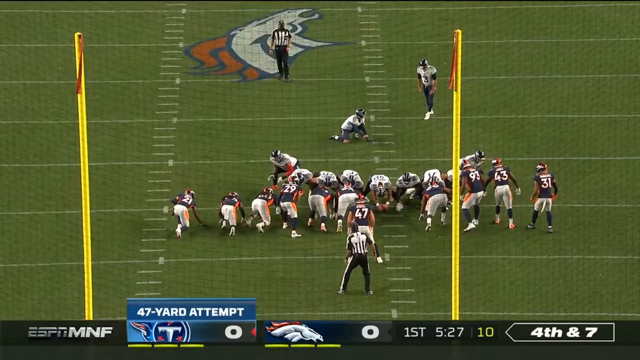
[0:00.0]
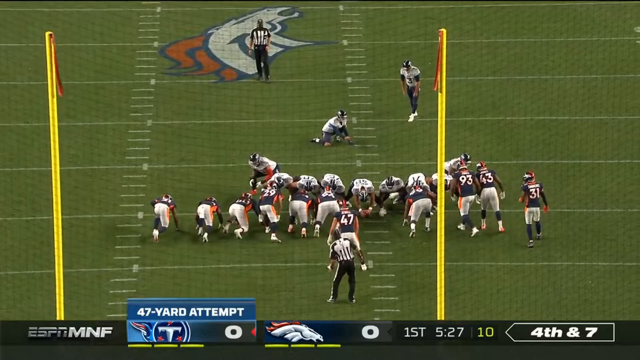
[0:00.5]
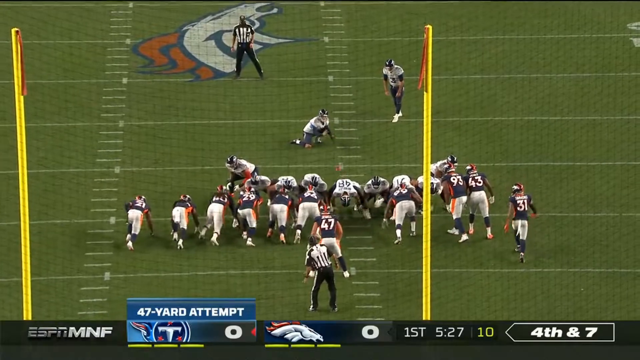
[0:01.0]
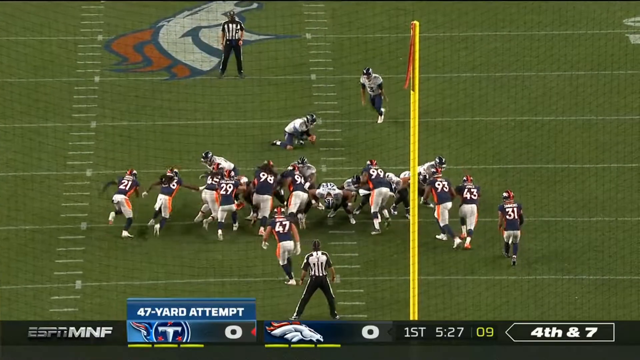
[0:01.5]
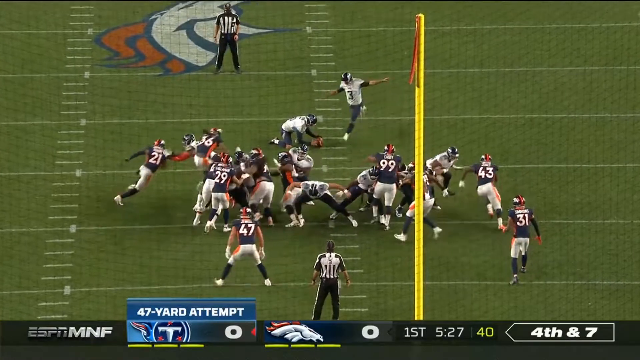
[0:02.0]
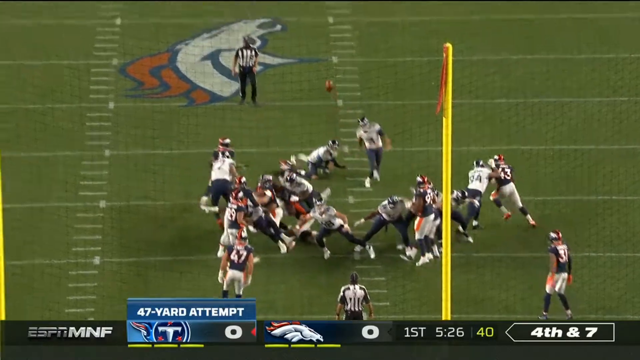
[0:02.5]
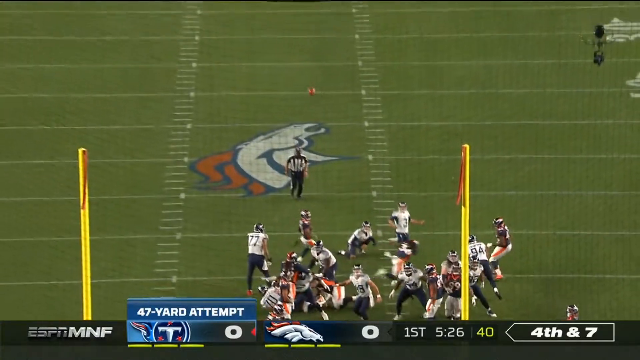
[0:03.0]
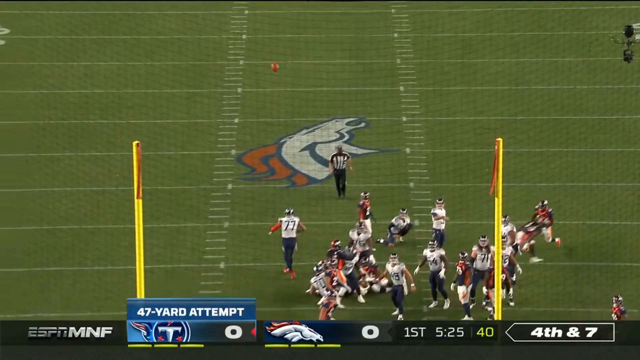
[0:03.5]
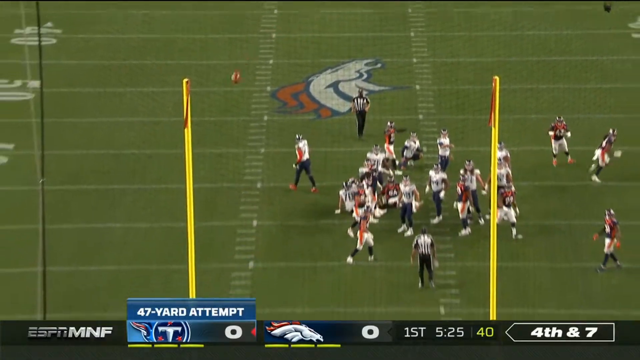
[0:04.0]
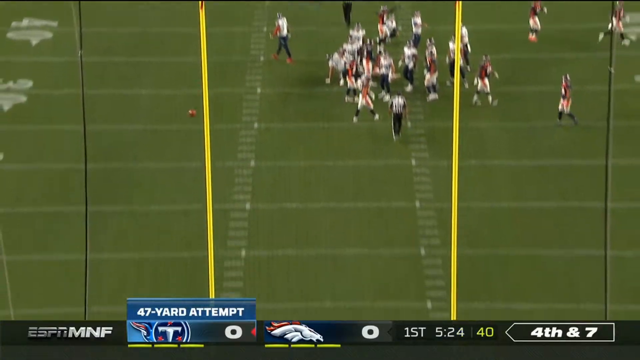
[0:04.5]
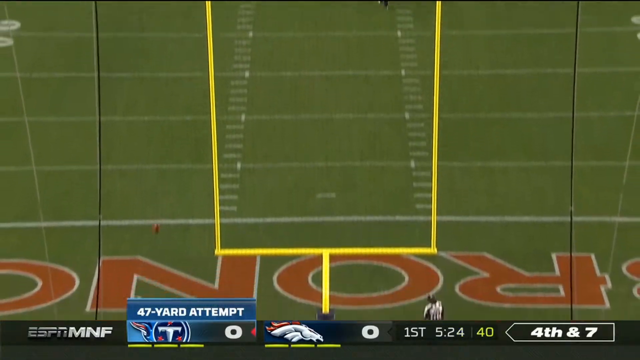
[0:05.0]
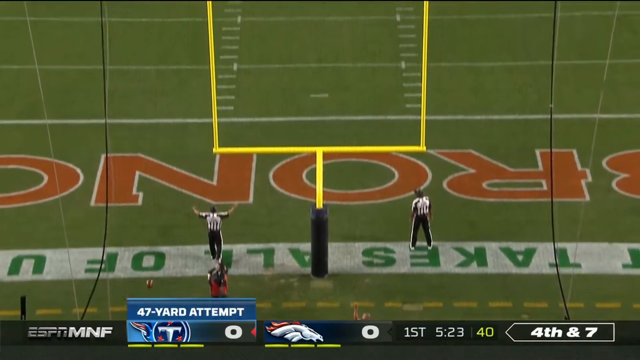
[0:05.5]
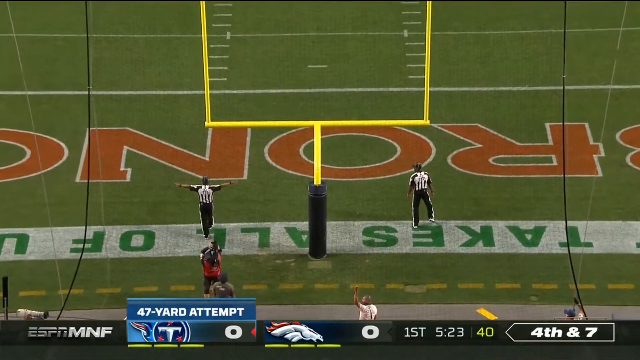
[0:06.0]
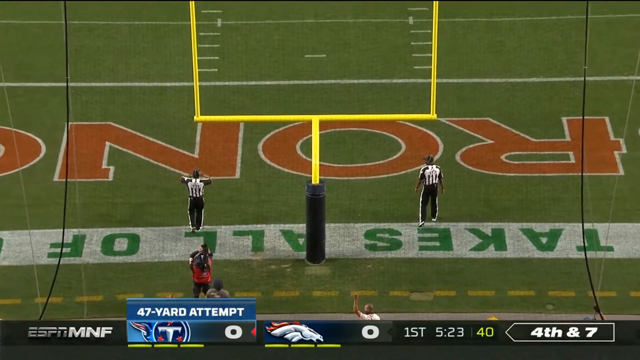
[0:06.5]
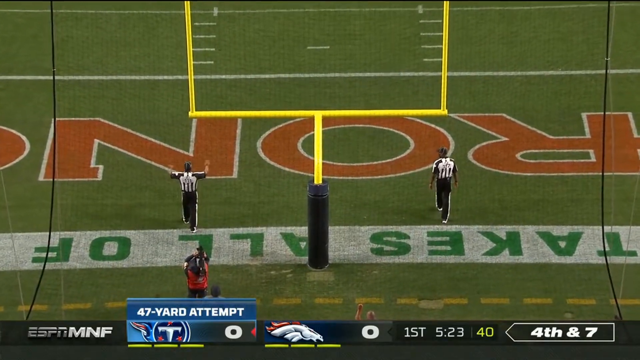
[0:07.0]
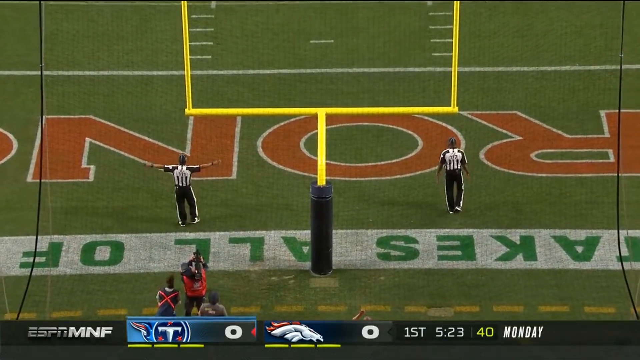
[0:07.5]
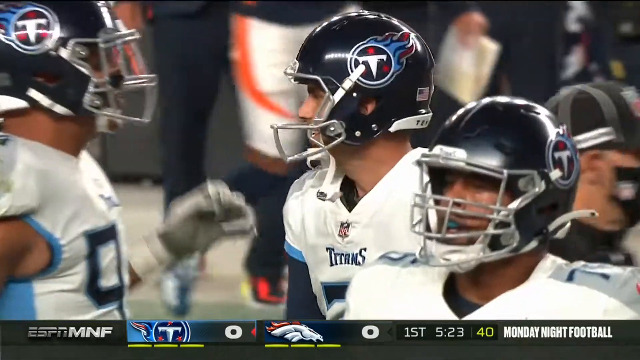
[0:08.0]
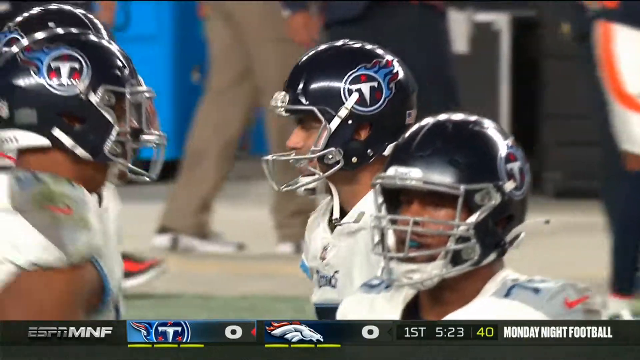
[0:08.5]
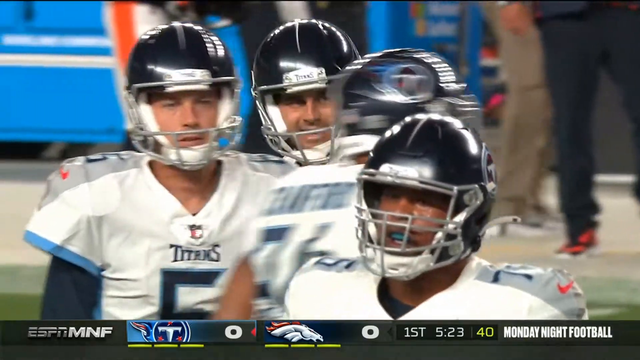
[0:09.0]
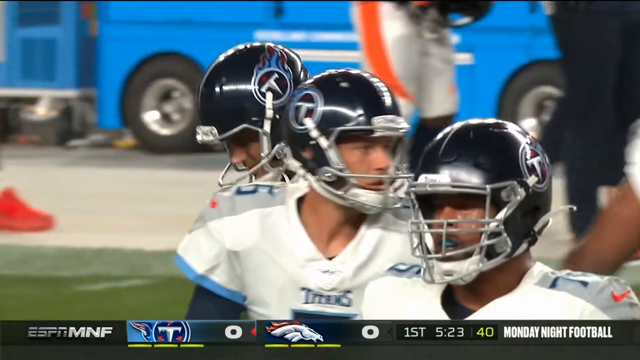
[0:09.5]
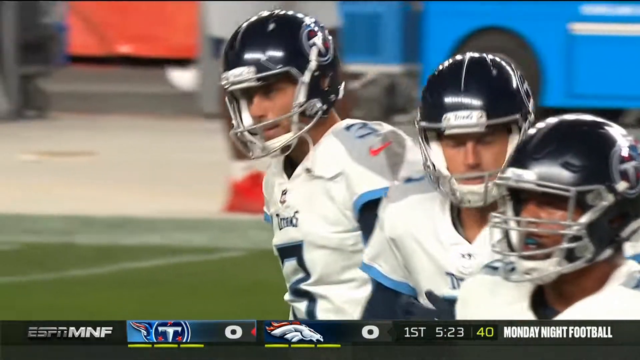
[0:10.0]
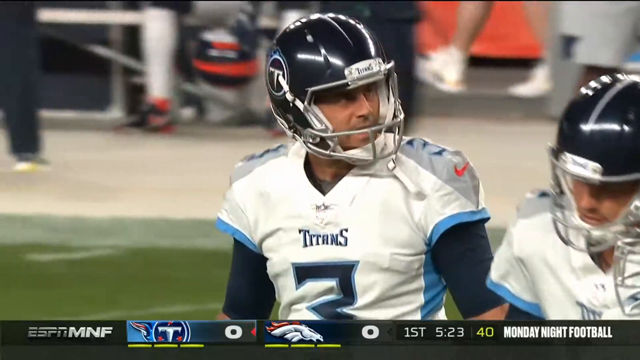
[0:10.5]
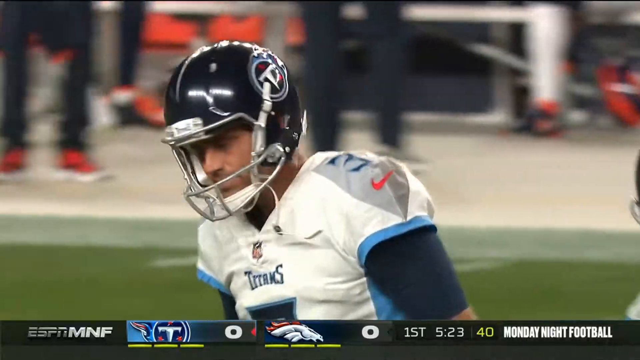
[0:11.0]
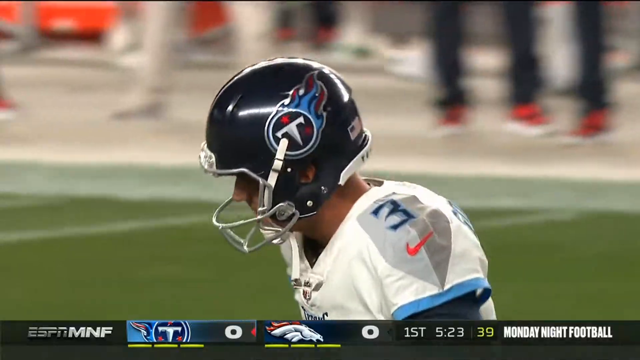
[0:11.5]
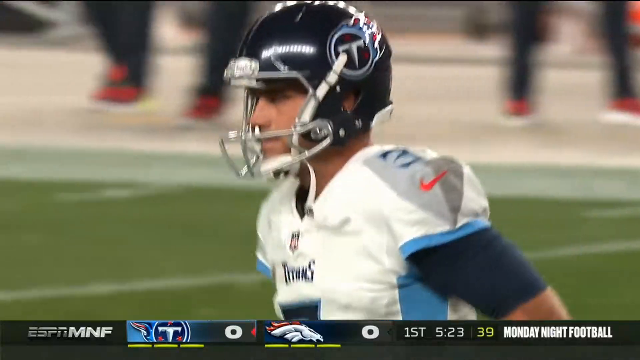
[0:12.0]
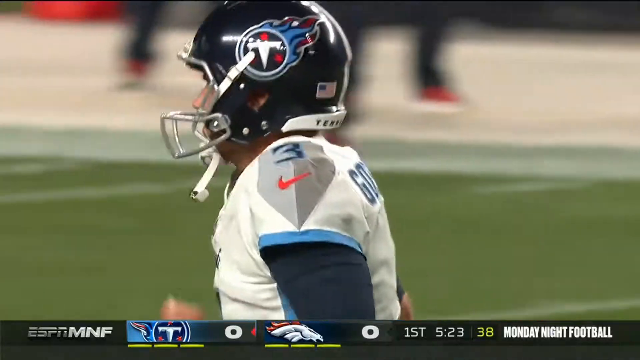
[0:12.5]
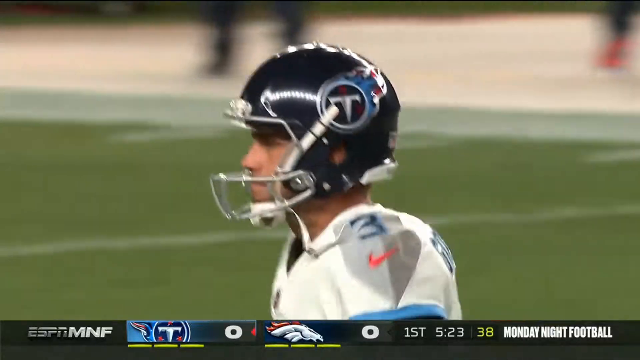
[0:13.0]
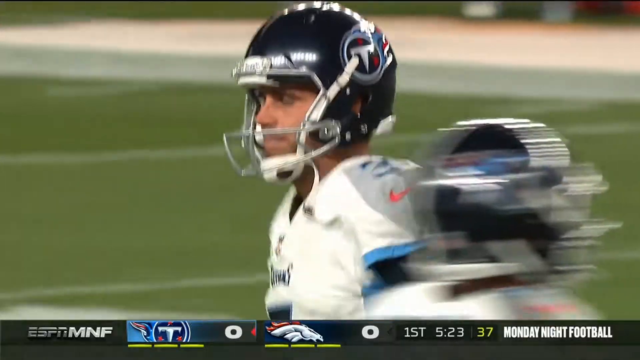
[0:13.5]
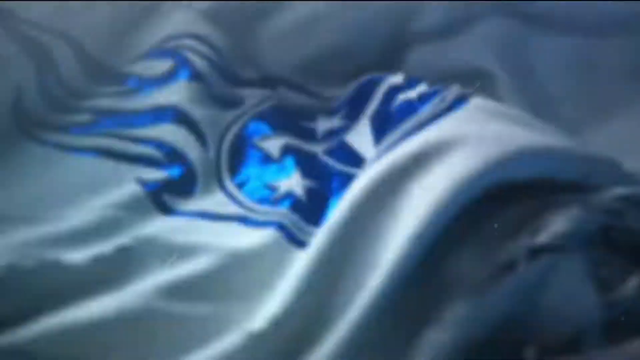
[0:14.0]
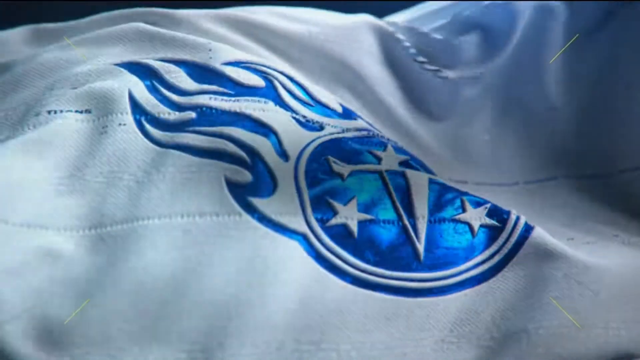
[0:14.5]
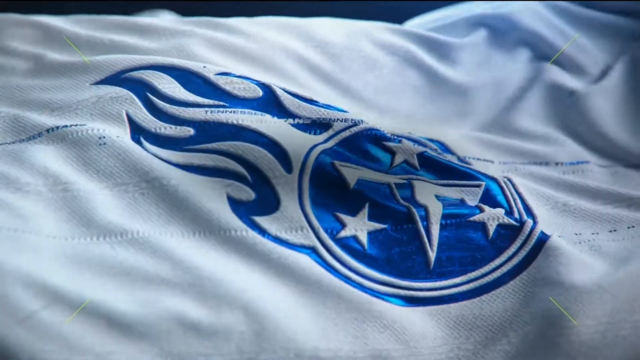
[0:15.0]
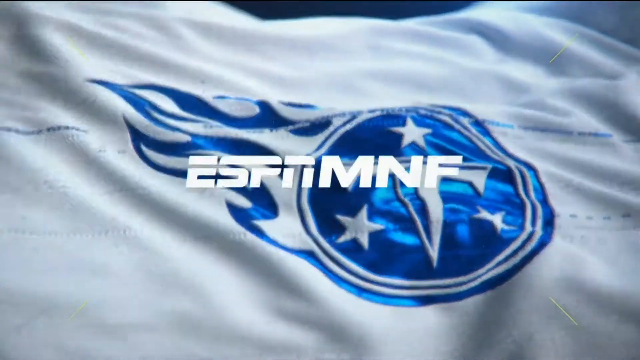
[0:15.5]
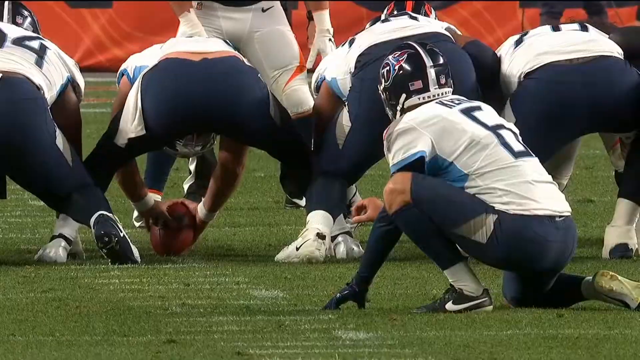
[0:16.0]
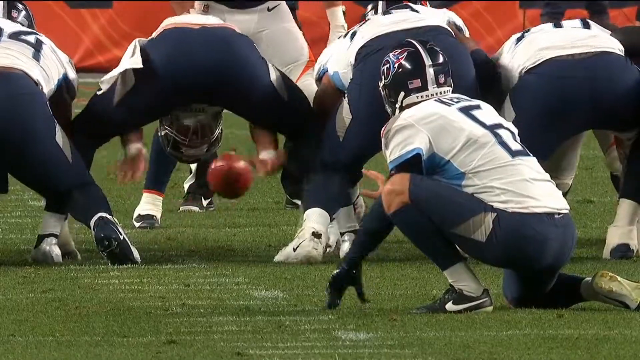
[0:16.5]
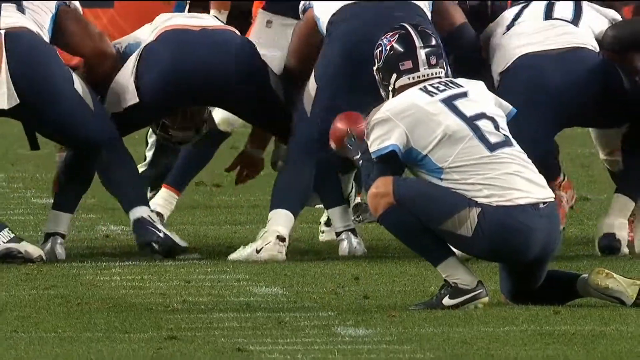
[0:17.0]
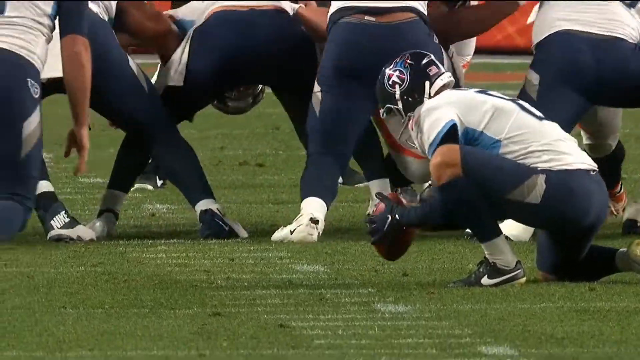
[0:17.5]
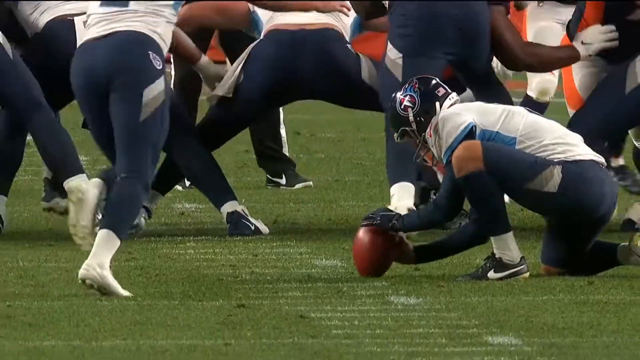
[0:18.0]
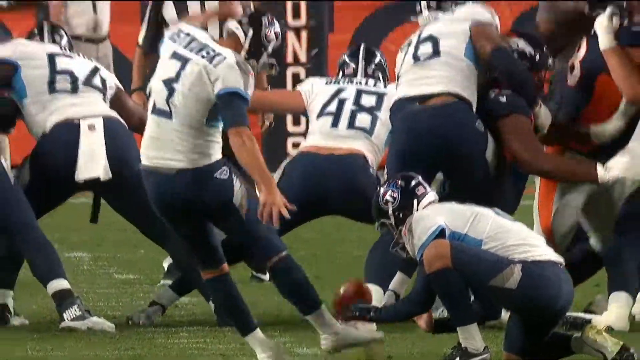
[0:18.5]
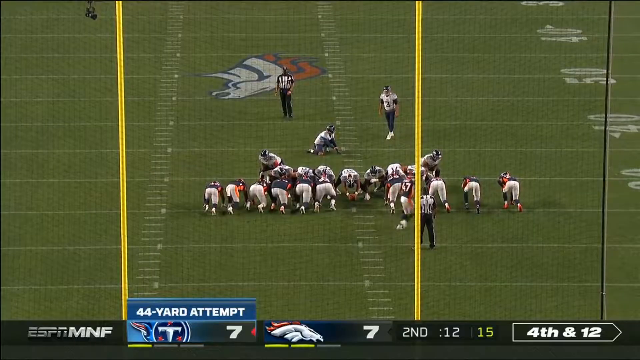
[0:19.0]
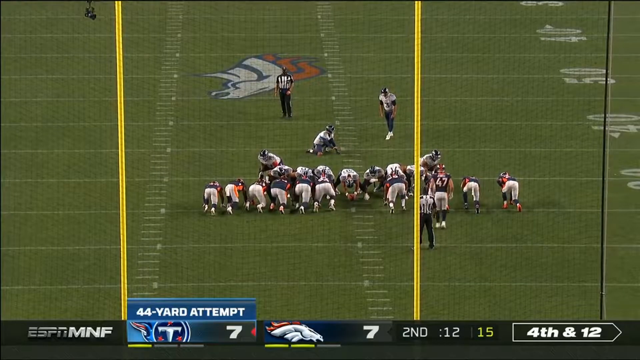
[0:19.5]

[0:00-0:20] A football game shows a 47-yard field goal attempt on screen. The two teams facing each other are the Tennessee Titans and the Denver Broncos, with the Titans attempting the 47-yard field goal. The game is on ESPN Monday Night Football. At the bottom left, a score panel shows the team abbreviations, the time, the quarter and the logos. The Tennessee Titans logo has a T, what appears to be a circle, and a flame, while the Denver Broncos logo appears to show a horse with orange hair and white skin. It is the first quarter with 5 minutes and 27 seconds remaining and 10 seconds on the clock, and it is fourth and 7.